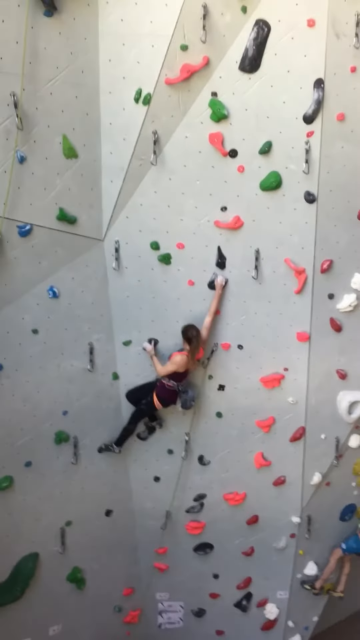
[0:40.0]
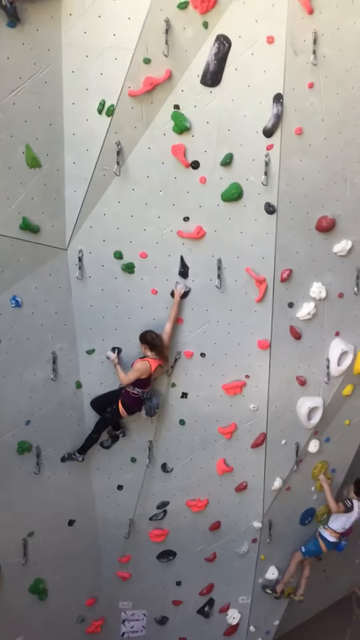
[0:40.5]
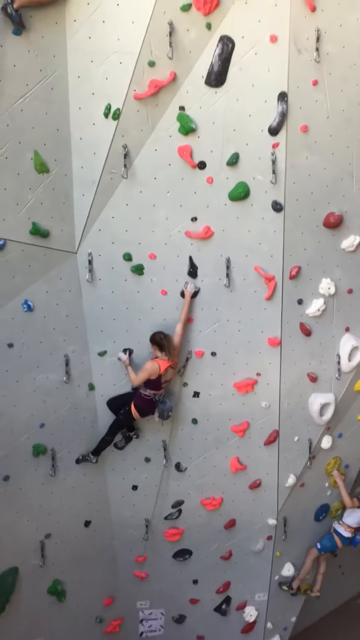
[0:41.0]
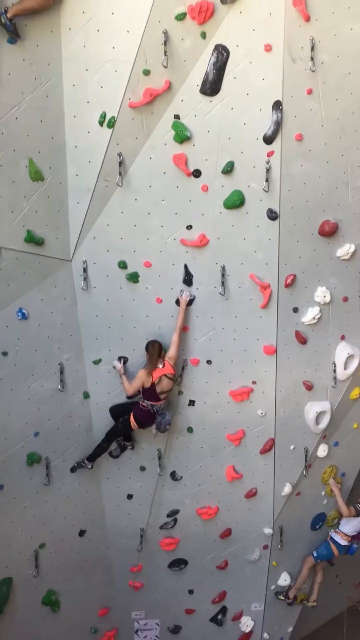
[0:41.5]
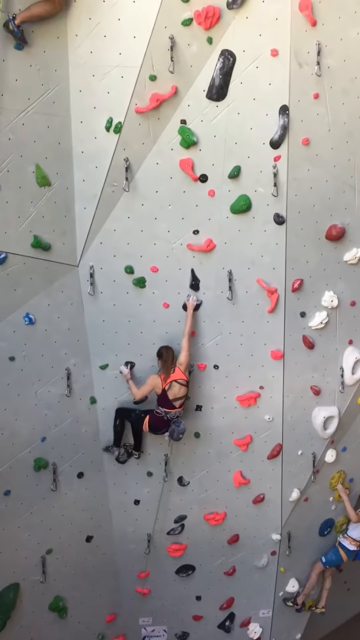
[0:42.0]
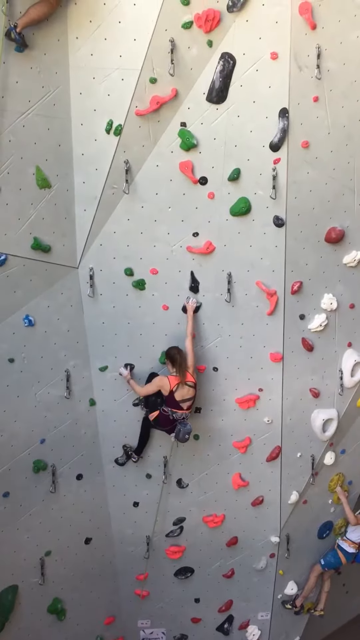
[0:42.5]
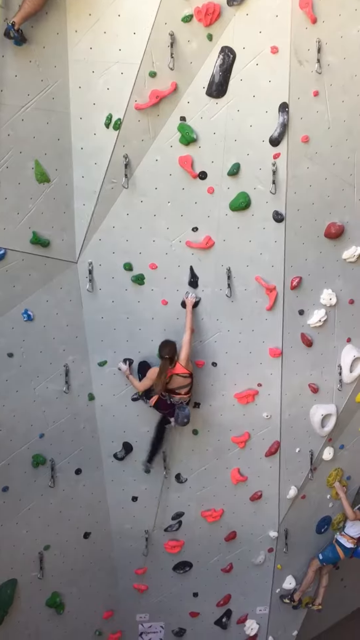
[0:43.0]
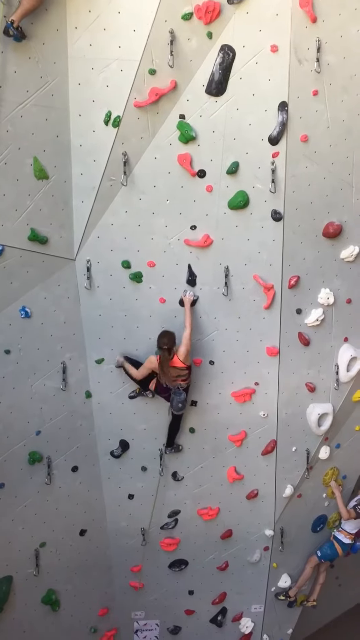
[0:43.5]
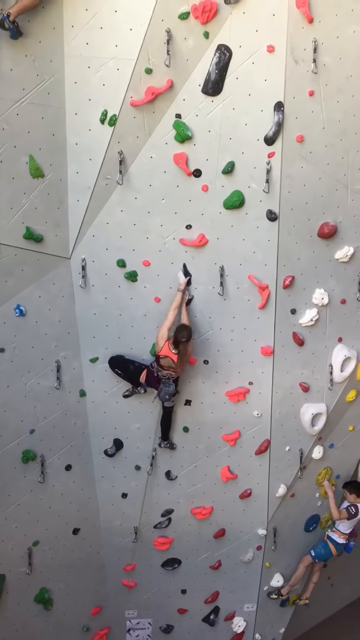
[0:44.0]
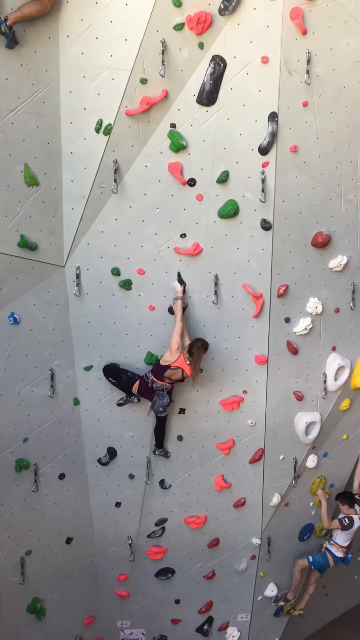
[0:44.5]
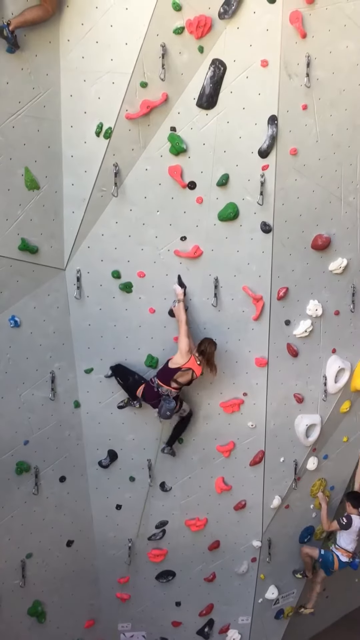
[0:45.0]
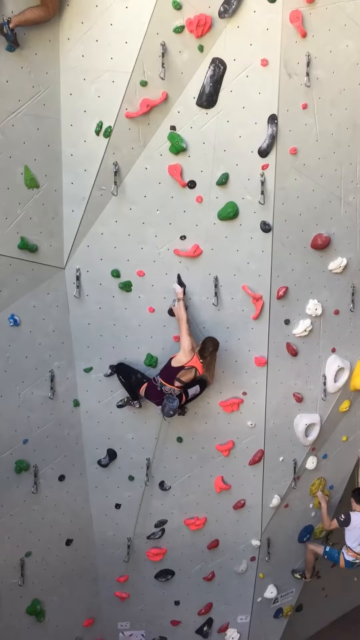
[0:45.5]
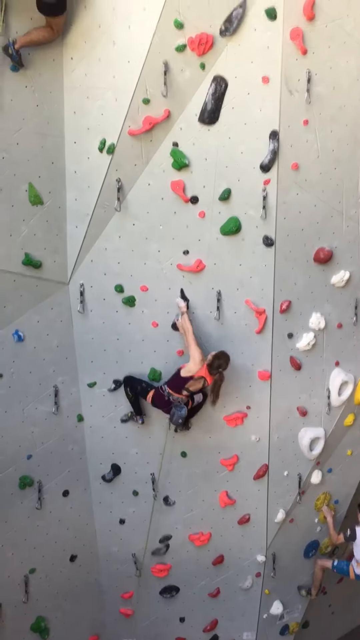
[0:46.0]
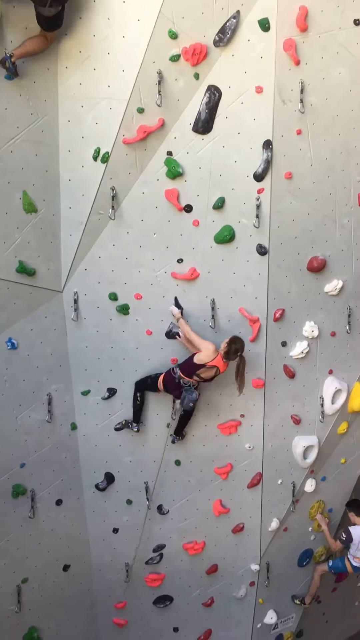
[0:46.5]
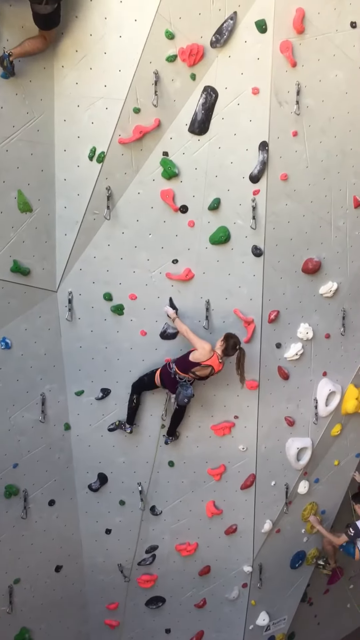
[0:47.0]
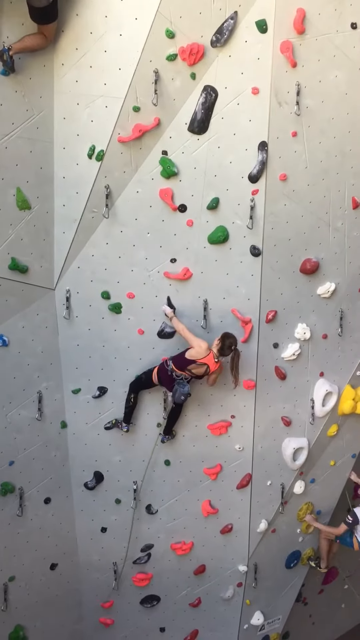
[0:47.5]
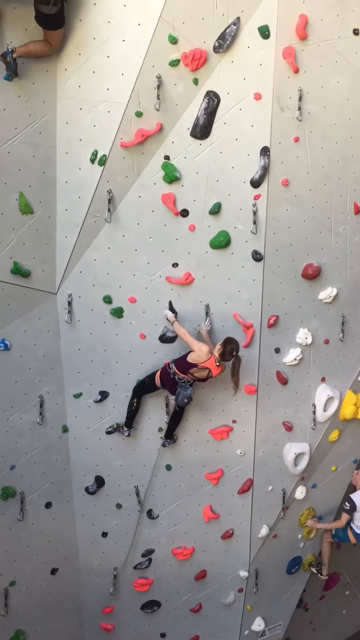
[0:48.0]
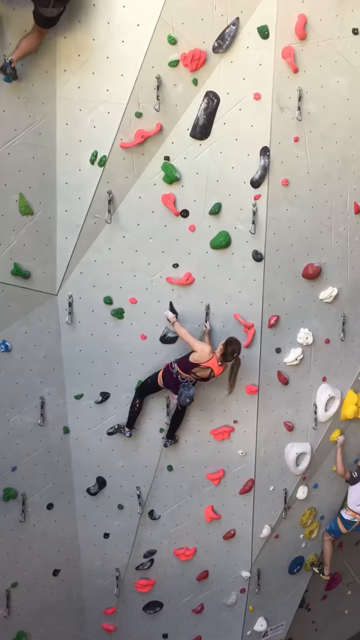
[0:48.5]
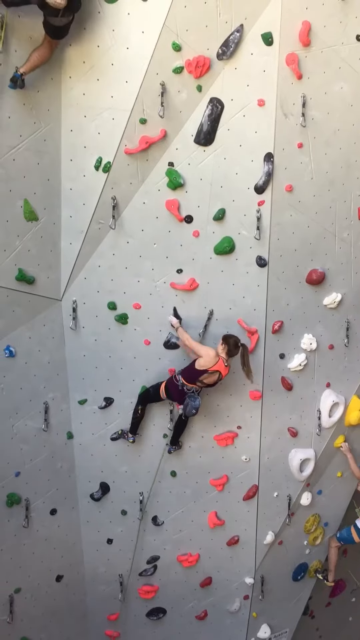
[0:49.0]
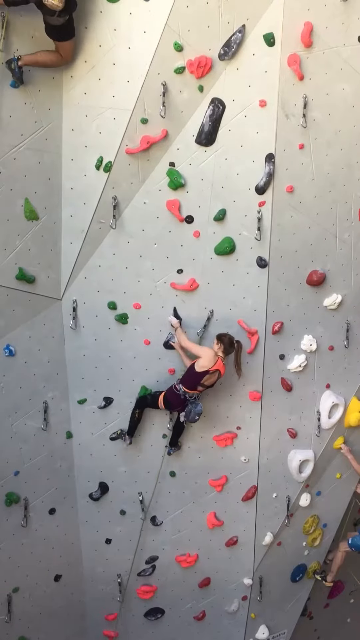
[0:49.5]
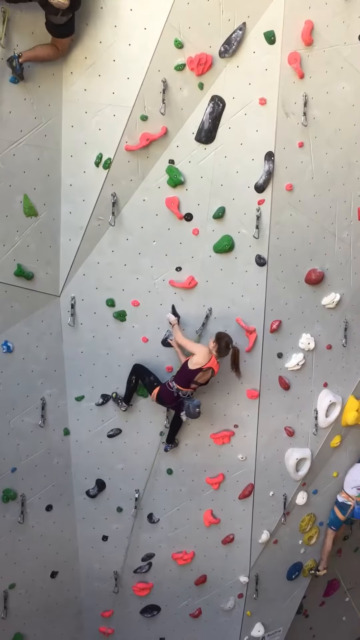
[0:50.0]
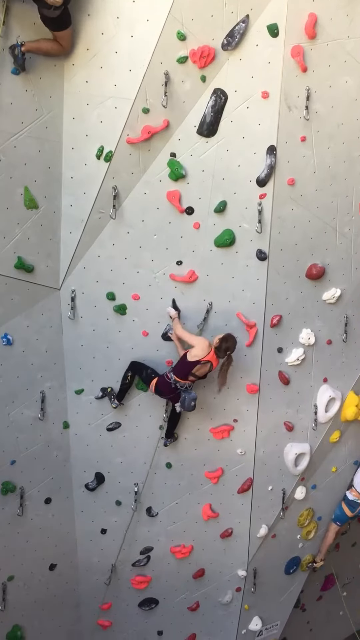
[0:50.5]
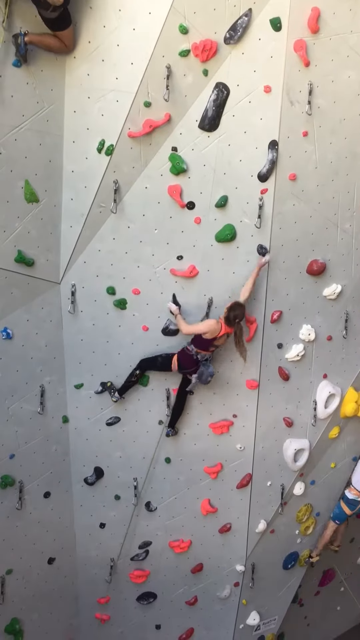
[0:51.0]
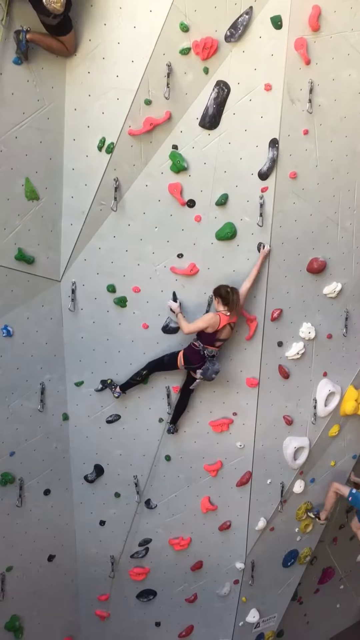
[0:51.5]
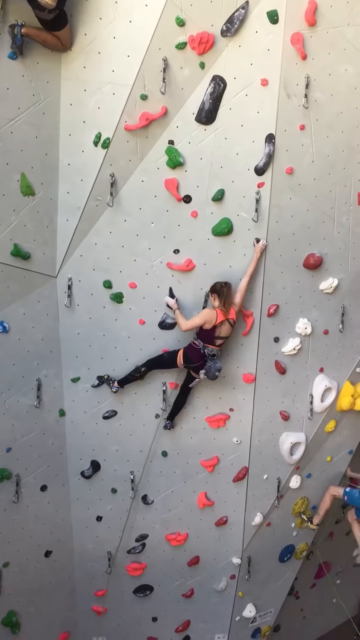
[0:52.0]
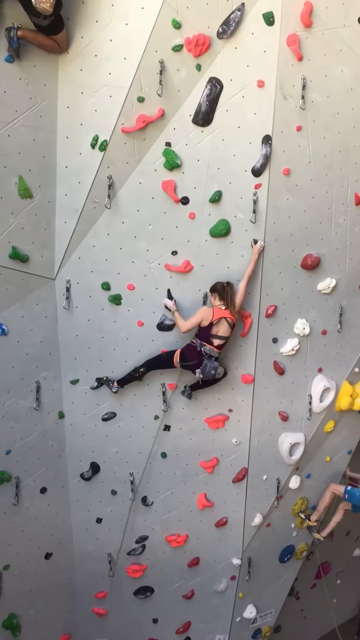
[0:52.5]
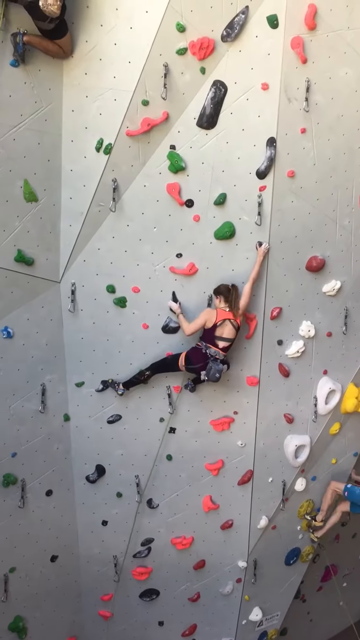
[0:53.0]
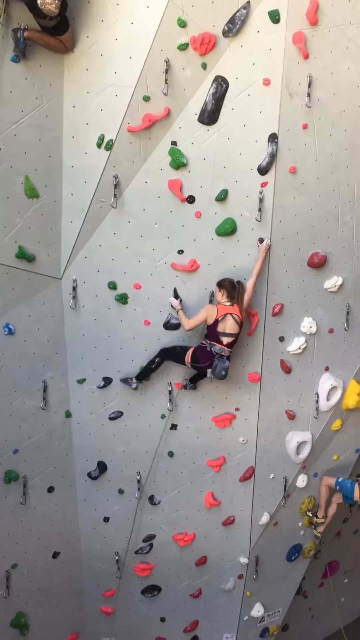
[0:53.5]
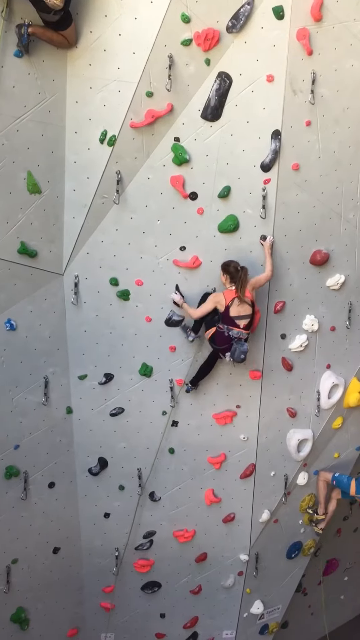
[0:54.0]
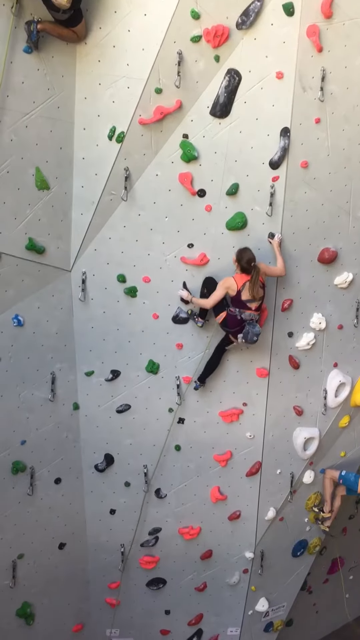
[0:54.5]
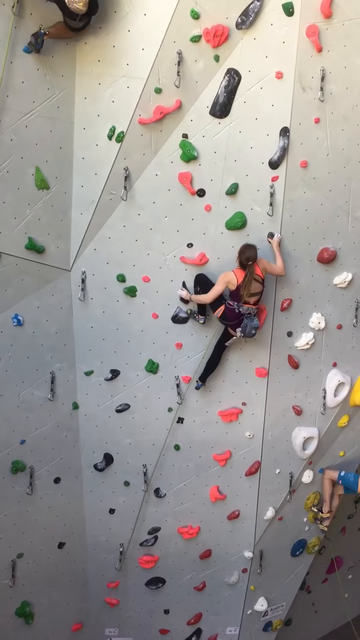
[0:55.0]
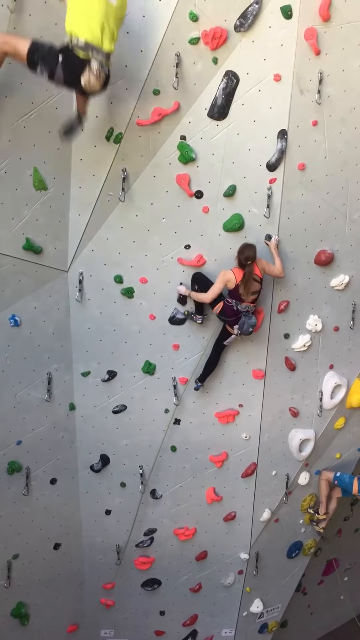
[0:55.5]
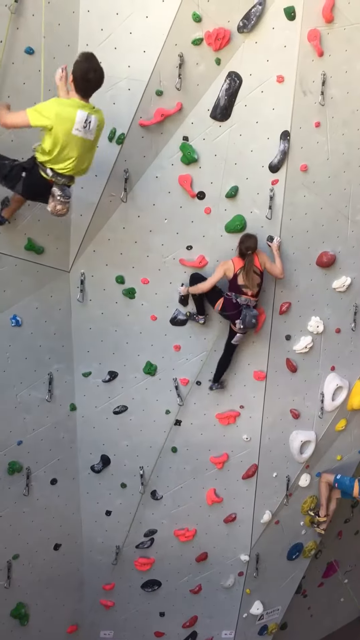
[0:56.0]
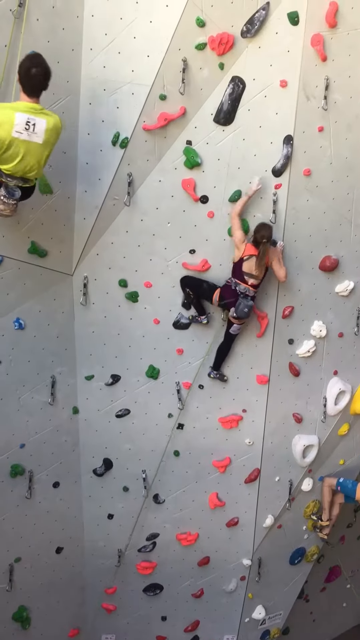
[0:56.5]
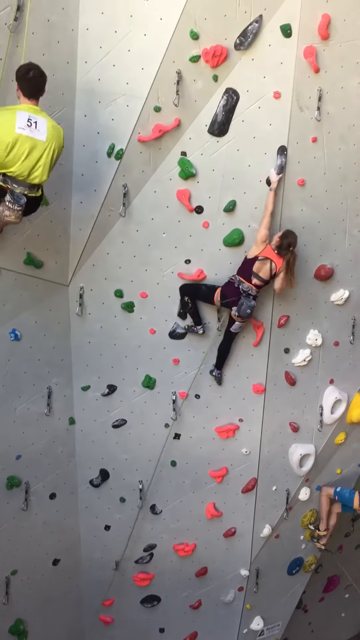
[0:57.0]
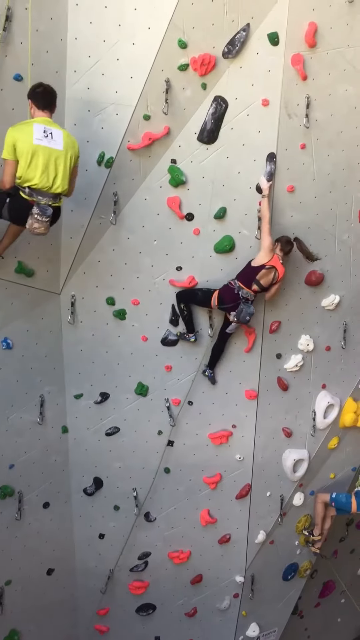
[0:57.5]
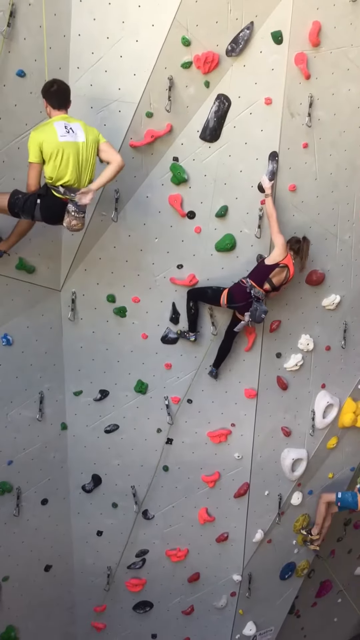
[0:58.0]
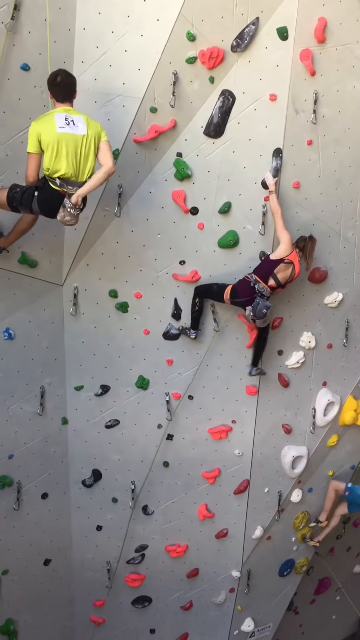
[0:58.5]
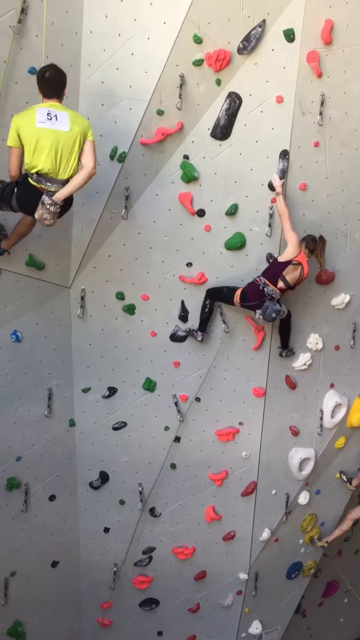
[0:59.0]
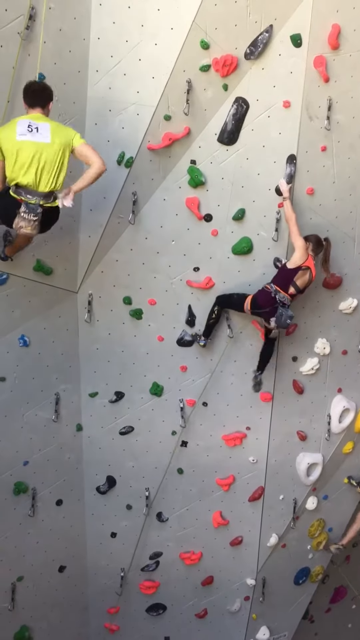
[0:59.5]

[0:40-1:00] The young woman climbs the grey climbing wall, positioned diagonally facing right and reaching up to a black piece on her right side. In the lower right, a man in a white shirt and blue shorts holds on to a yellow piece, trying to climb. The camera pans right as the woman brings her knee up, brings her left arm up to the black piece, then brings her right knee up and pulls herself up. She then grabs a chain. The legs of another person wearing black shorts become visible in the upper left part of the wall. The woman reaches out with her right arm to grab a black piece as she raises her knee to pull herself up. The man in the upper left briefly falls backward and downward; he is wearing a yellow shirt. The man in the lower right is still climbing. The woman grabs a black piece with her left arm and moves right, trying to find her footing on a white piece with her right foot, then abandons that and brings her legs back together.